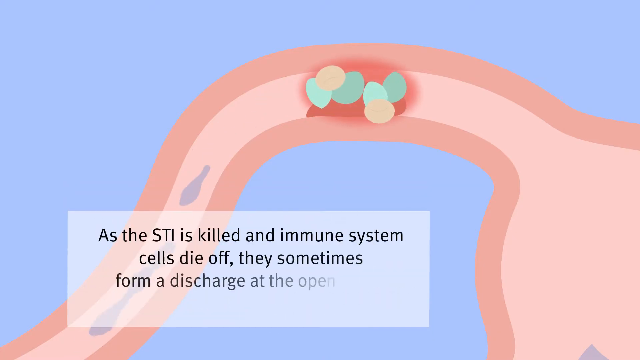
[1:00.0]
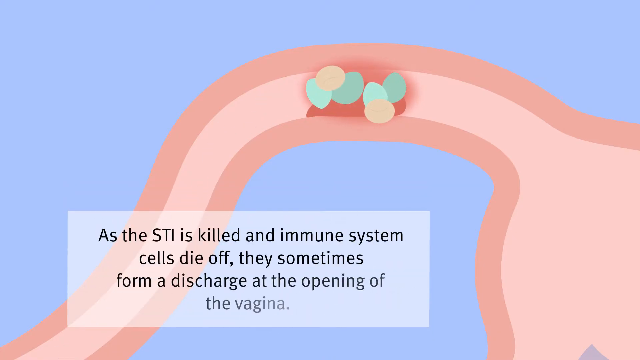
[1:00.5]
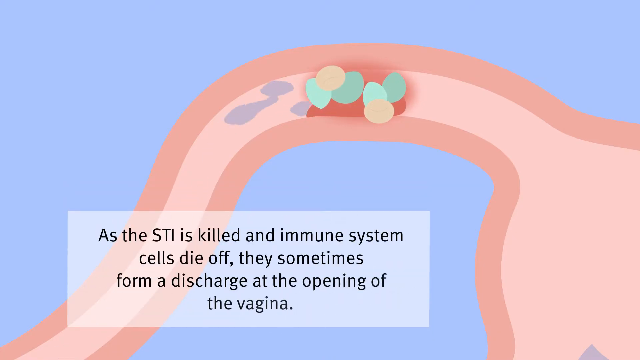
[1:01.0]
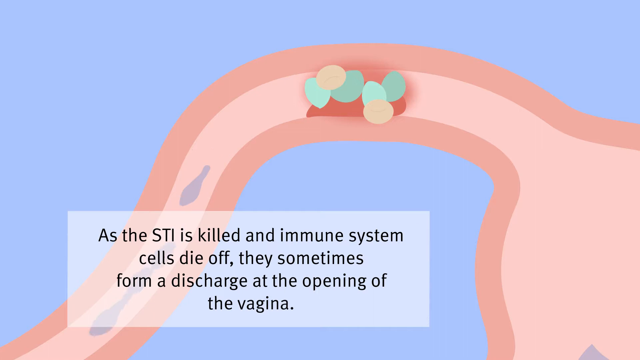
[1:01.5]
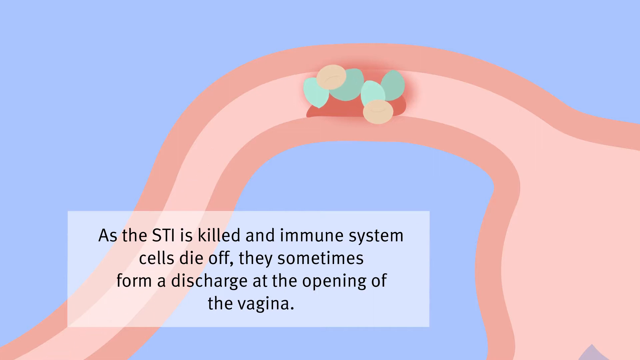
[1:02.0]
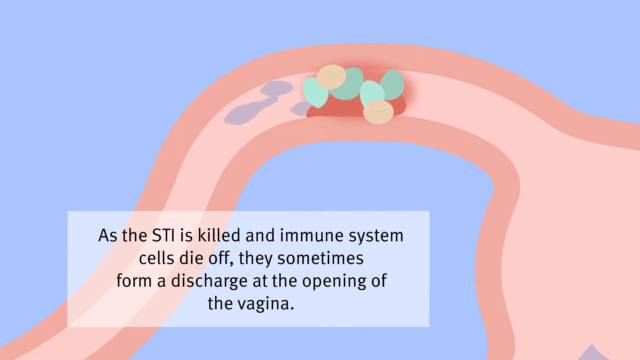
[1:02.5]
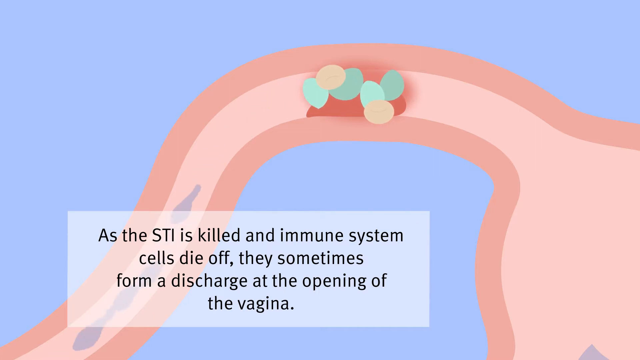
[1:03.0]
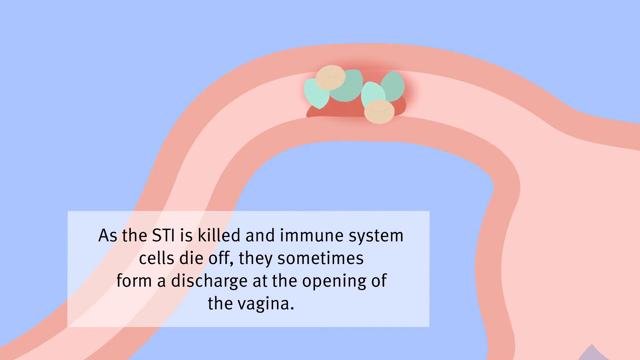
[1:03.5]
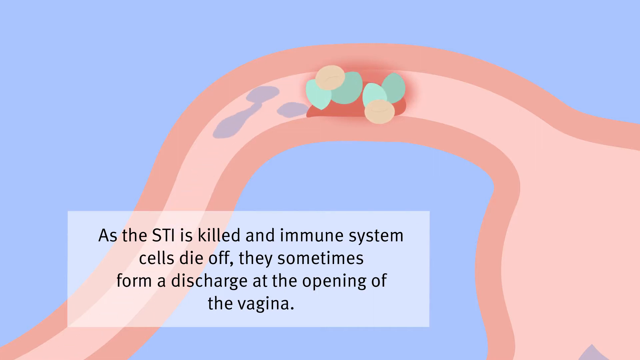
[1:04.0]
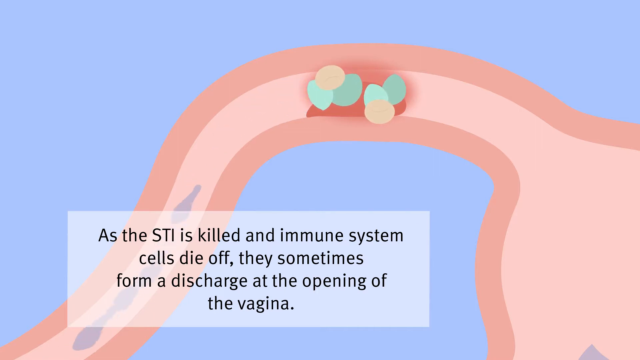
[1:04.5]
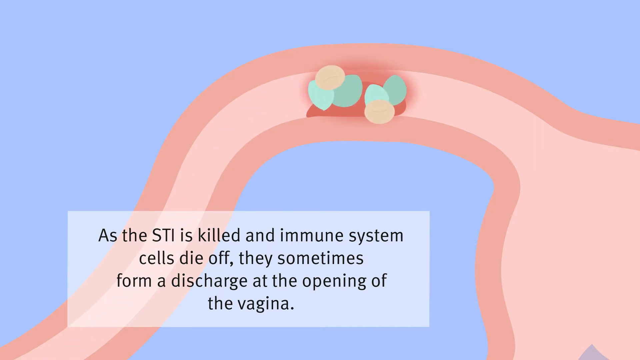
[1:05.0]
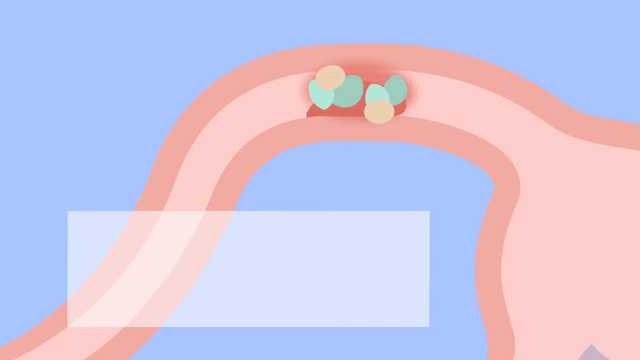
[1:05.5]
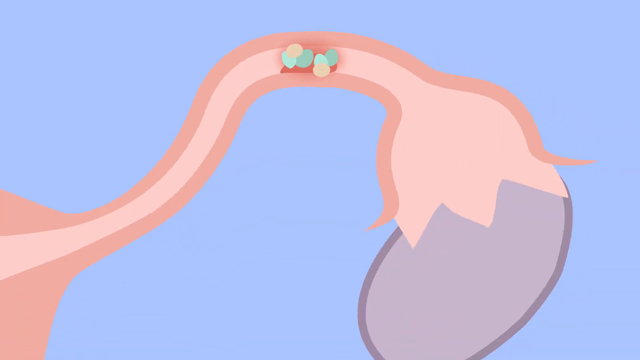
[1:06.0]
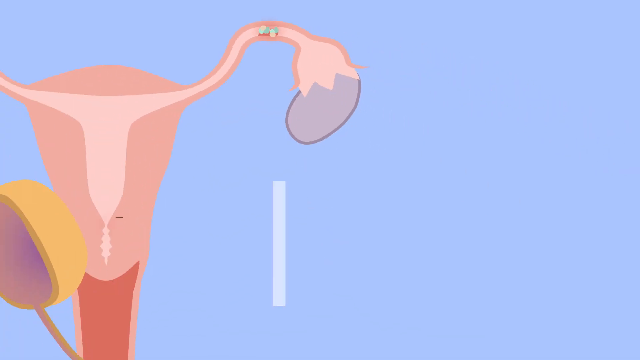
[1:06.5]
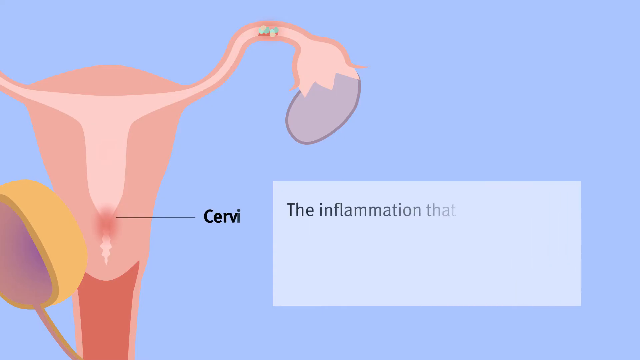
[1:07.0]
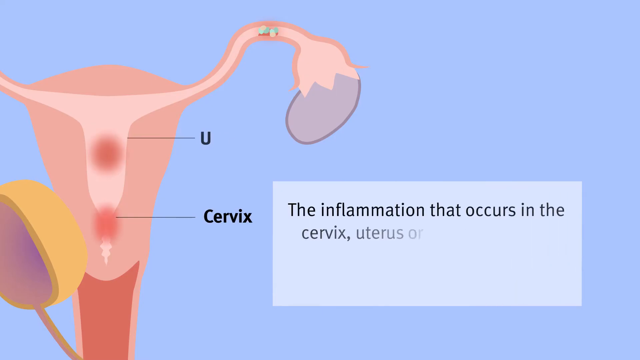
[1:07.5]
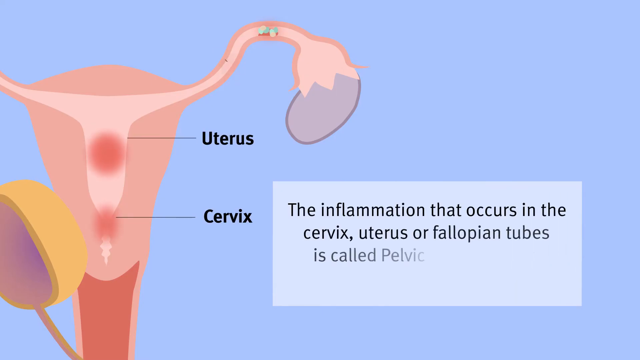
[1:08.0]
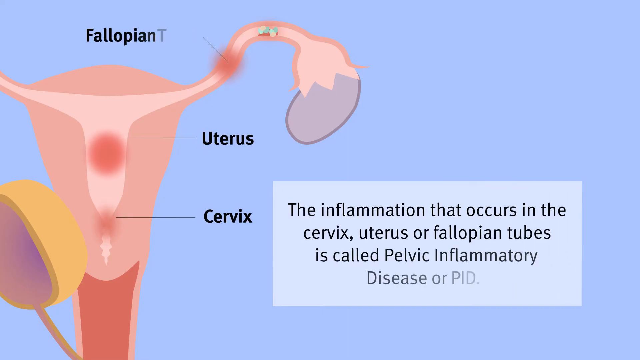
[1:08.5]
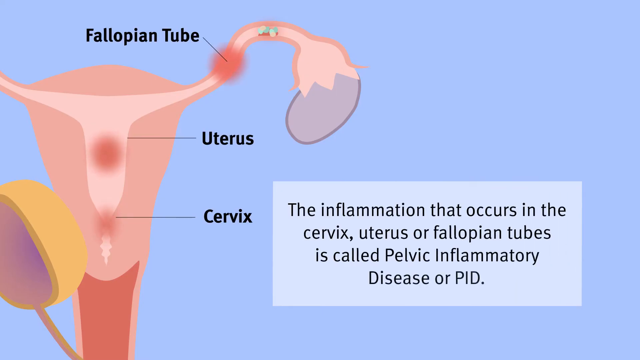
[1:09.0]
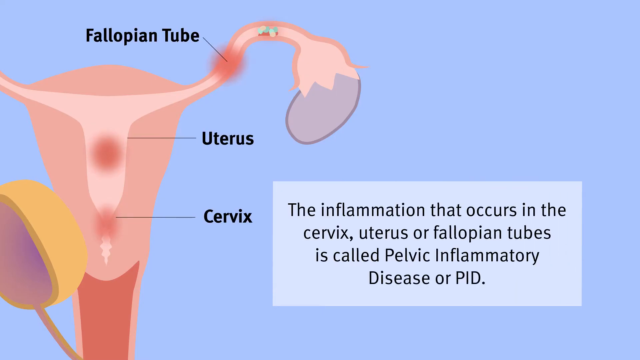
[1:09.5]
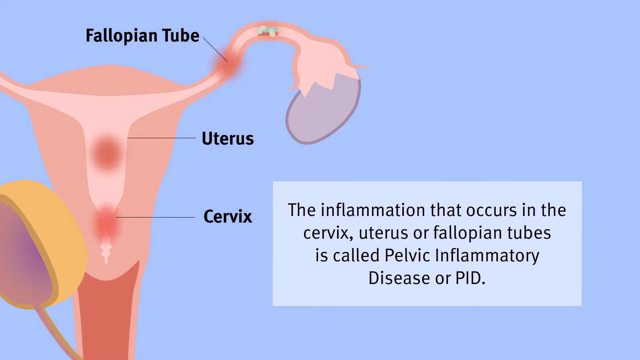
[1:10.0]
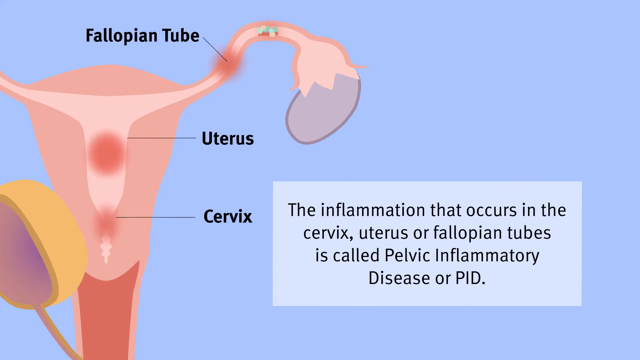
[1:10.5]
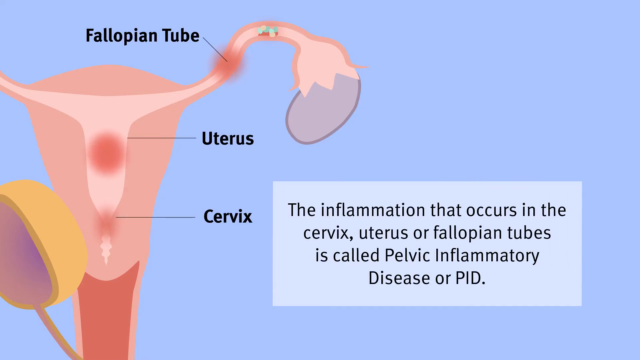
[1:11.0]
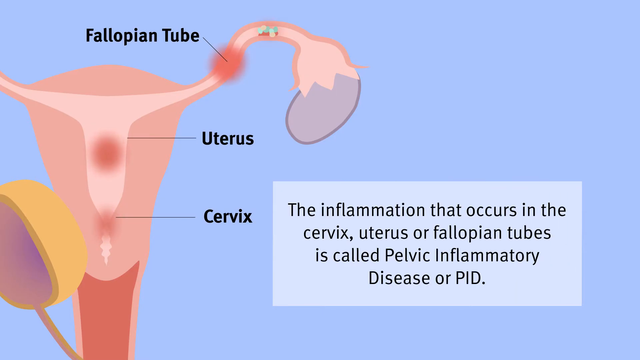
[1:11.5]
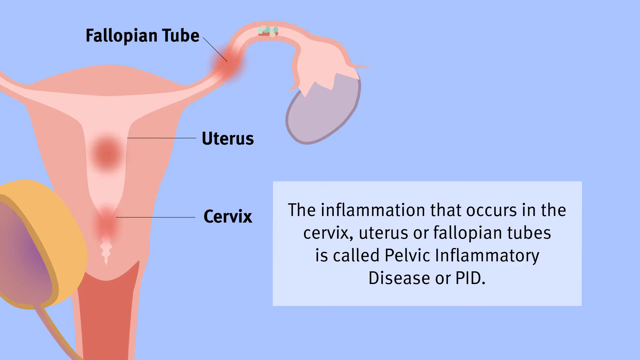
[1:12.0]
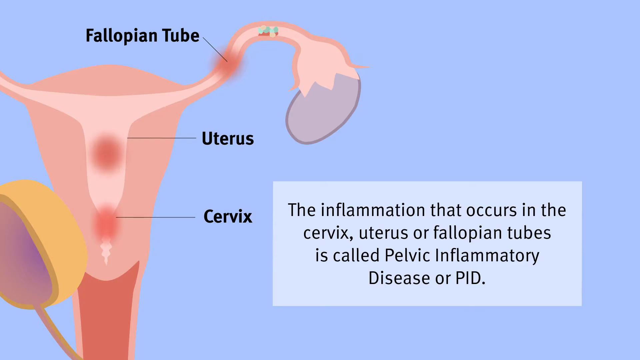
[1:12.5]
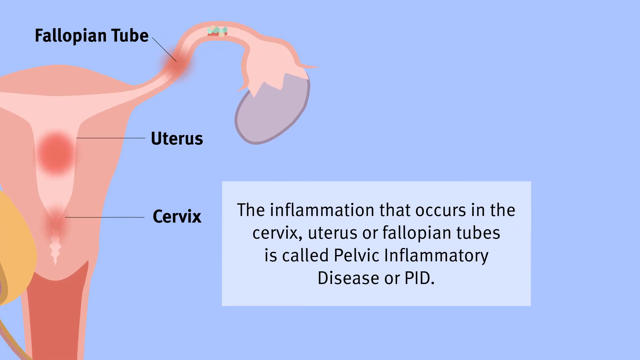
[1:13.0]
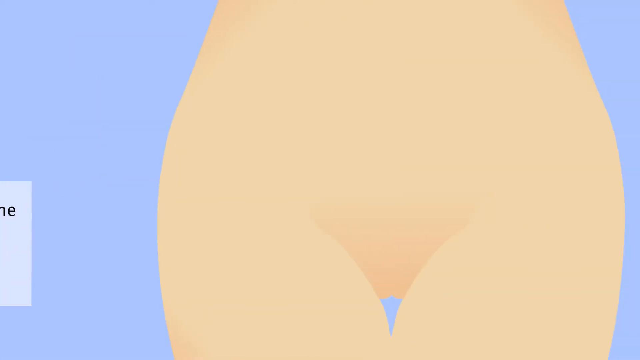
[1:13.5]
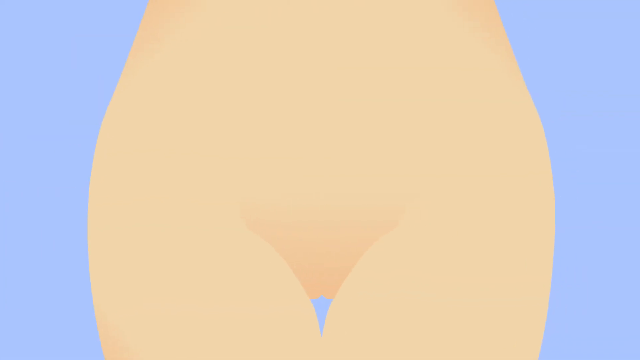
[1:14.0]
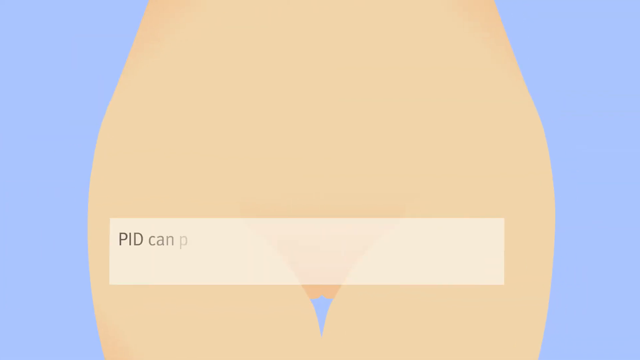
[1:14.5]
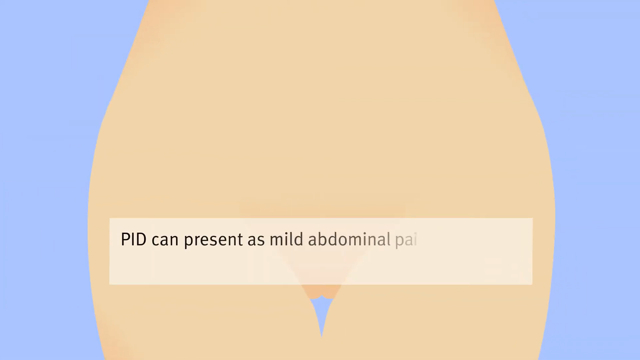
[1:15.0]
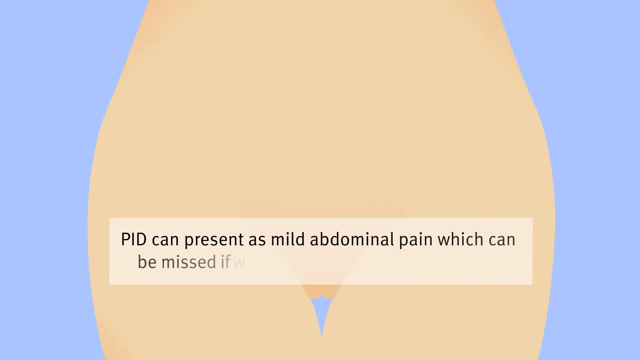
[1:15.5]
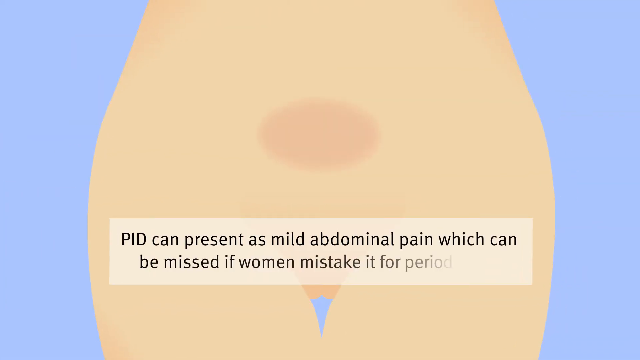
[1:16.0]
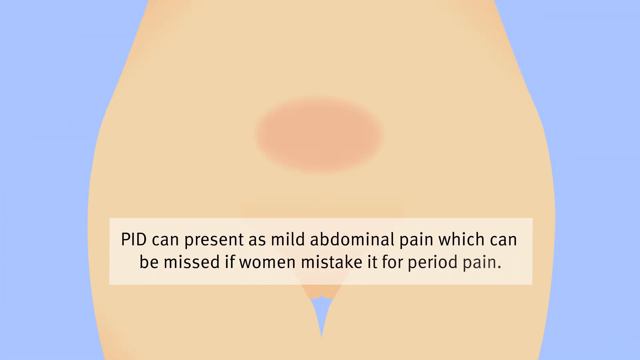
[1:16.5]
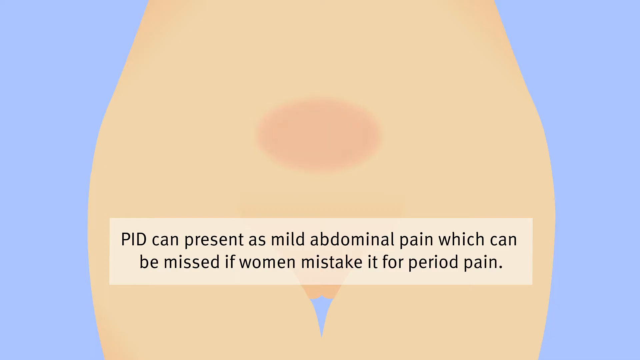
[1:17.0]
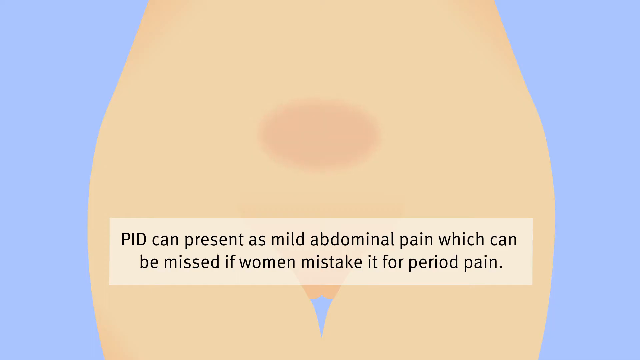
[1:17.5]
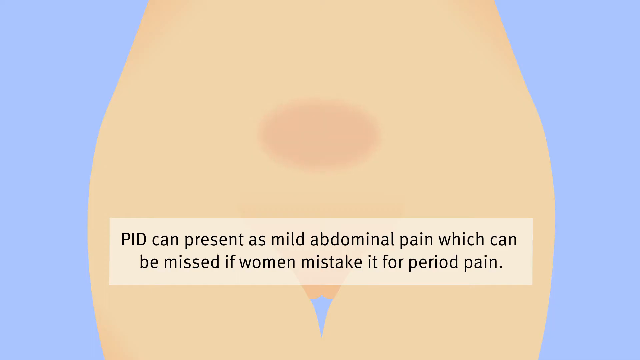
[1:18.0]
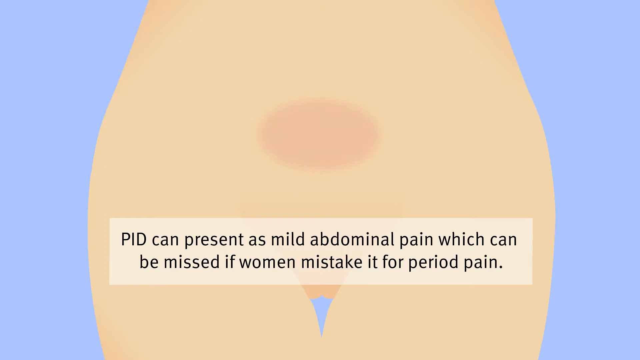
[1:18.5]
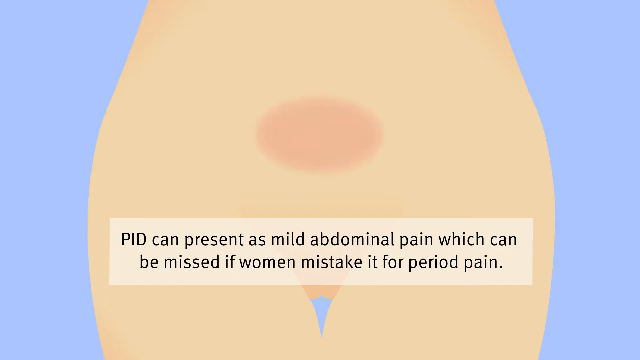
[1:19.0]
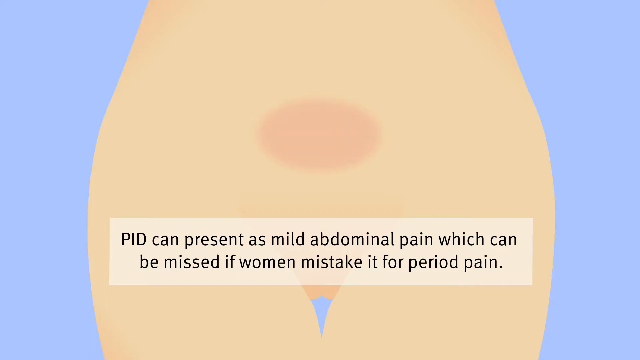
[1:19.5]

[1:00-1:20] On a blue background with computer-generated cartoon body parts, text reads "as the STI is killed and immune system cells die off they sometimes form a discharge at the opening of the vagina." Purple things that look kind of like swimming fish go back to the fallopian tube, and a gray box reads "the inflammation that occurs in the cervix uterus or fallopian tubes is called pelvic inflammatory disease or PID." The image then changes to a woman's lower body, with a sort of faint orangish oval roughly where the pelvic inflammatory disease would be, and the text "PID can present as mild abdominal pain which can be missed if women mistake it for period pain."